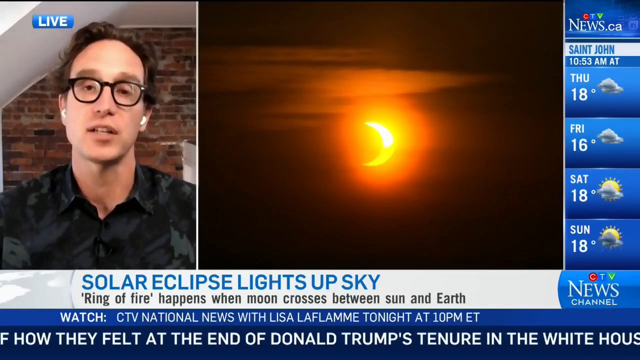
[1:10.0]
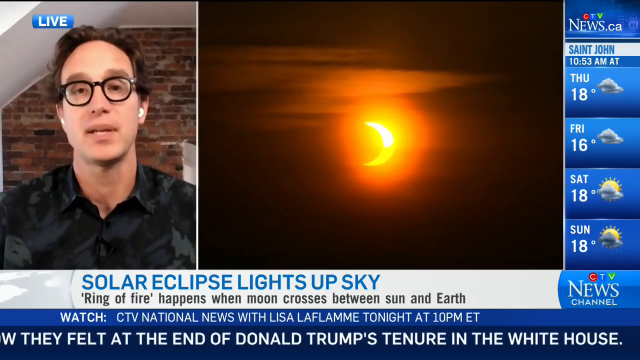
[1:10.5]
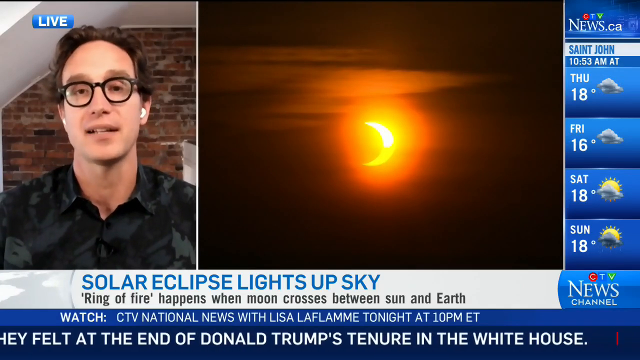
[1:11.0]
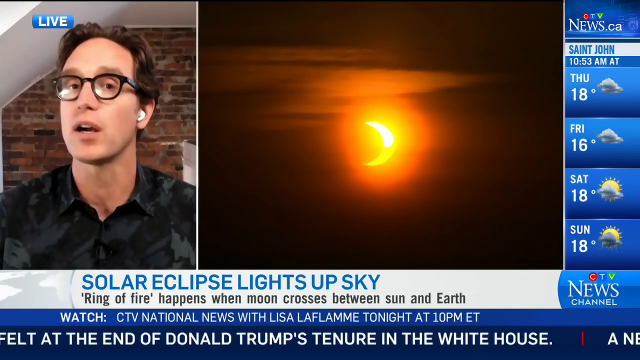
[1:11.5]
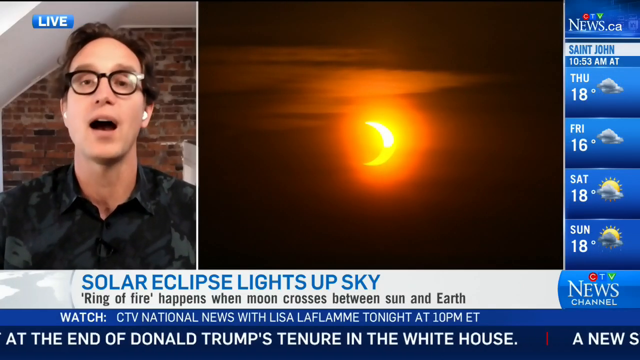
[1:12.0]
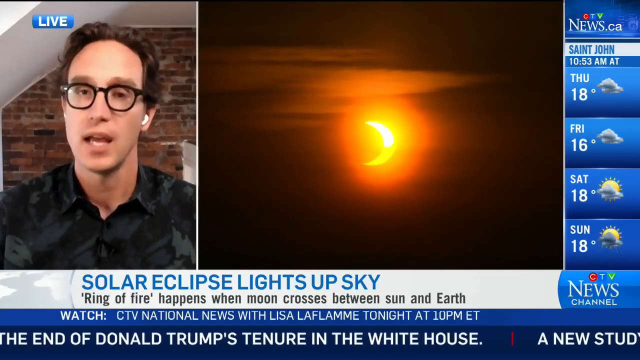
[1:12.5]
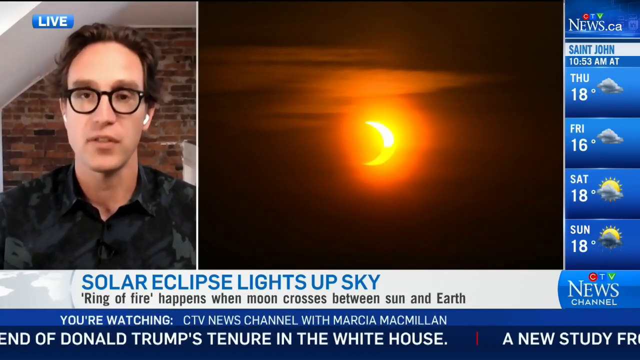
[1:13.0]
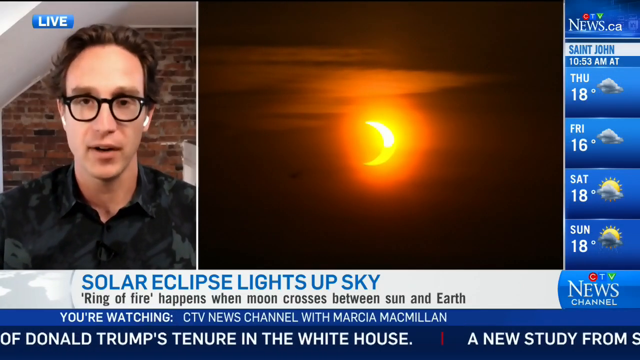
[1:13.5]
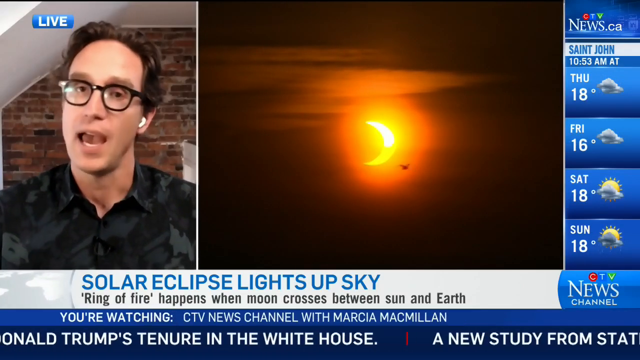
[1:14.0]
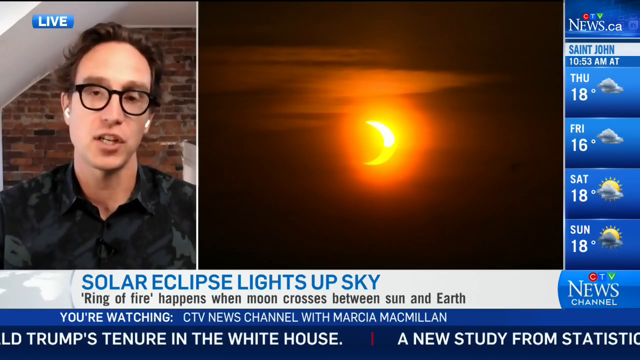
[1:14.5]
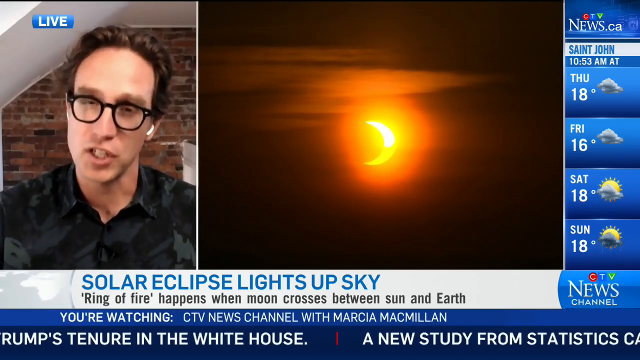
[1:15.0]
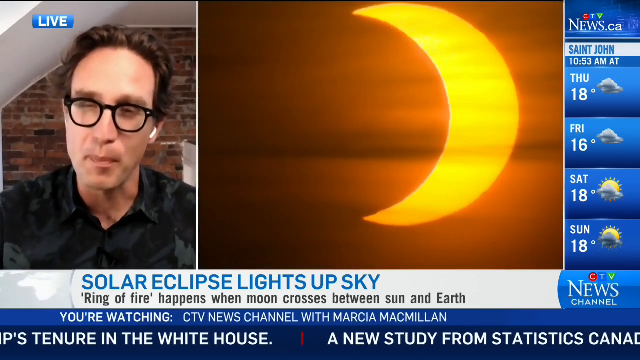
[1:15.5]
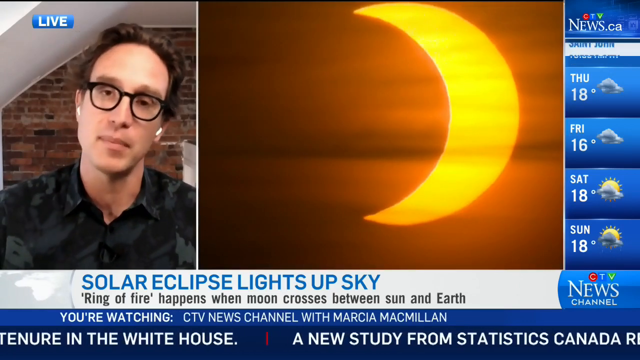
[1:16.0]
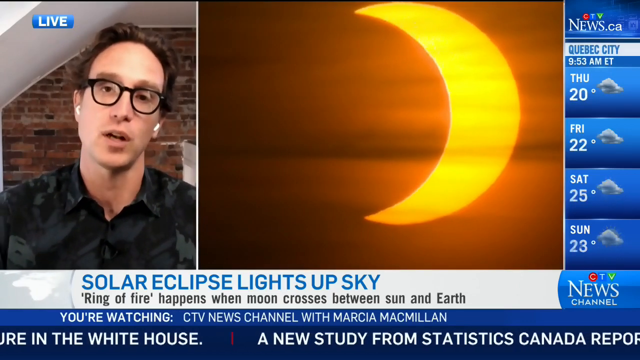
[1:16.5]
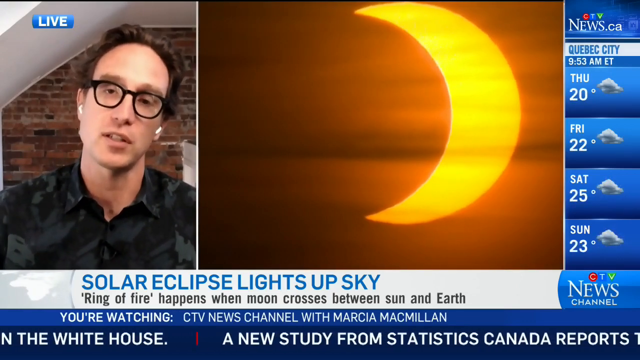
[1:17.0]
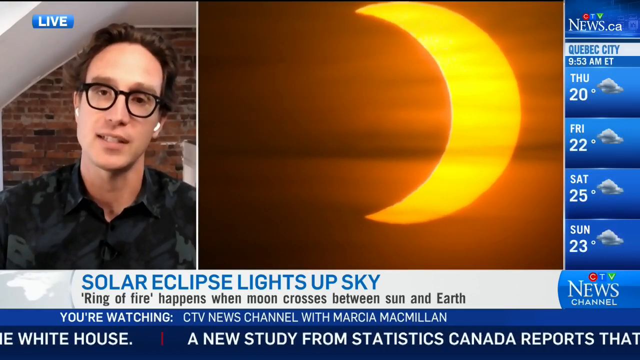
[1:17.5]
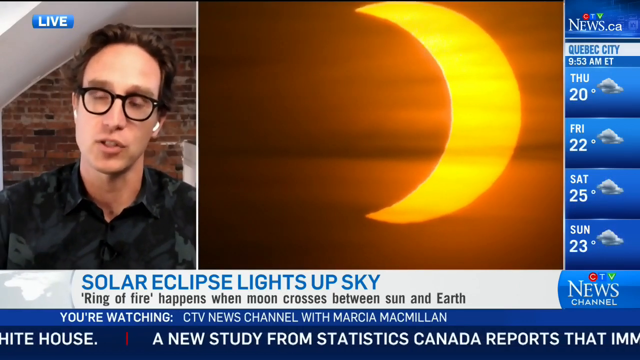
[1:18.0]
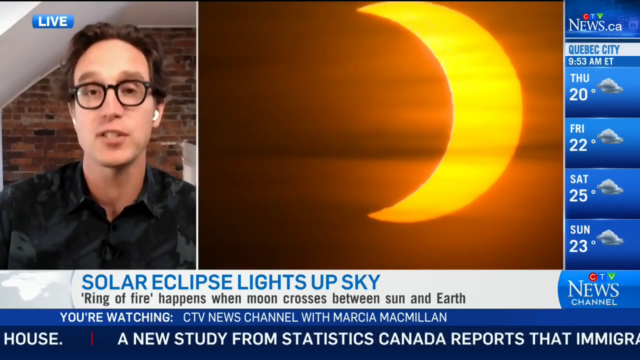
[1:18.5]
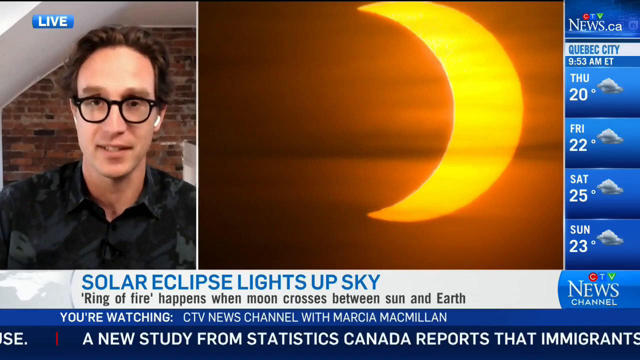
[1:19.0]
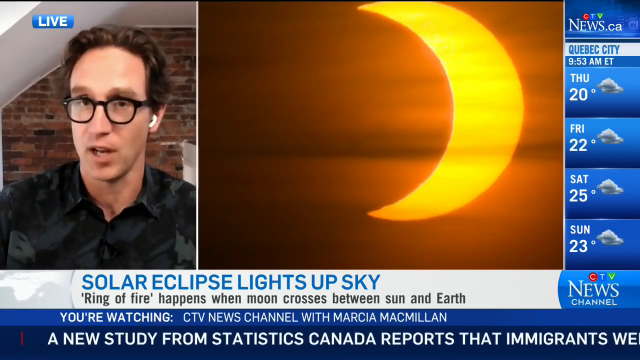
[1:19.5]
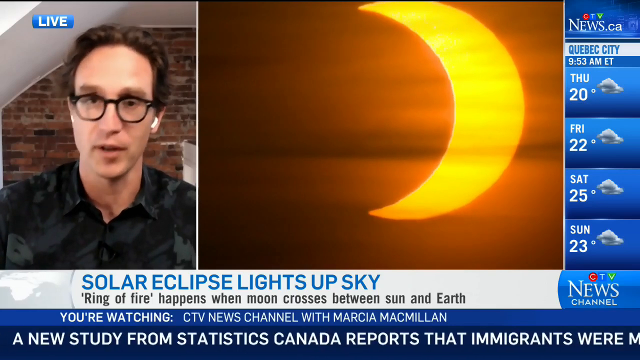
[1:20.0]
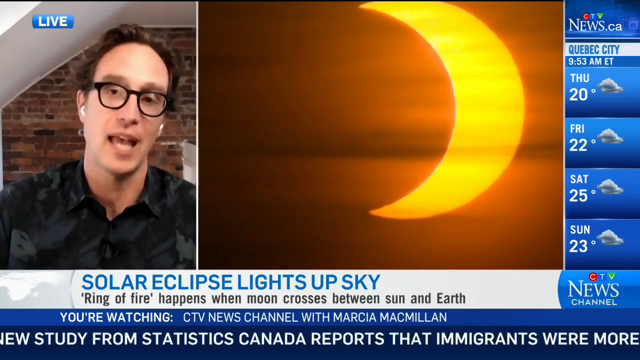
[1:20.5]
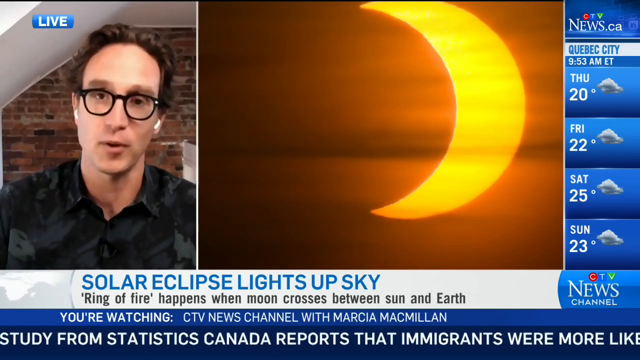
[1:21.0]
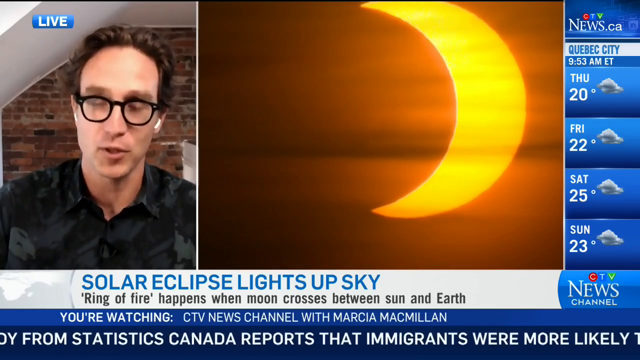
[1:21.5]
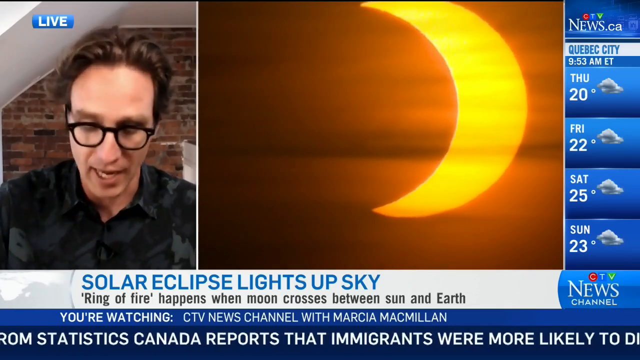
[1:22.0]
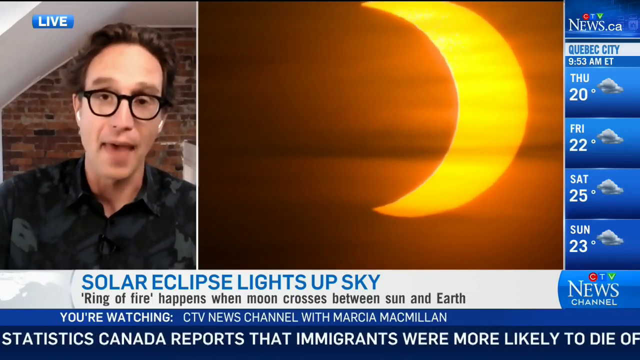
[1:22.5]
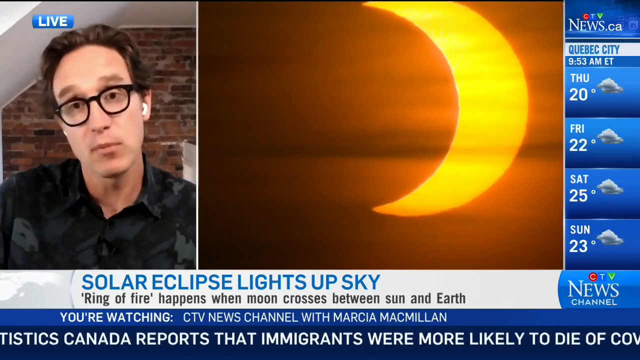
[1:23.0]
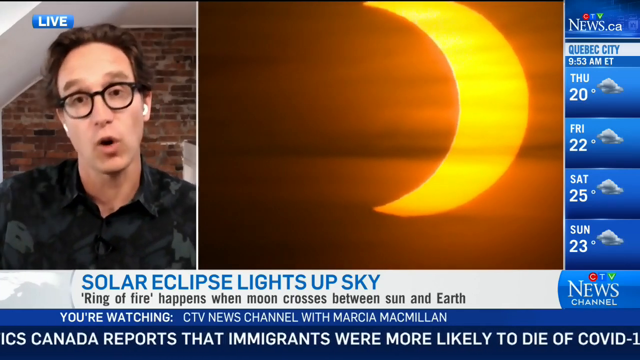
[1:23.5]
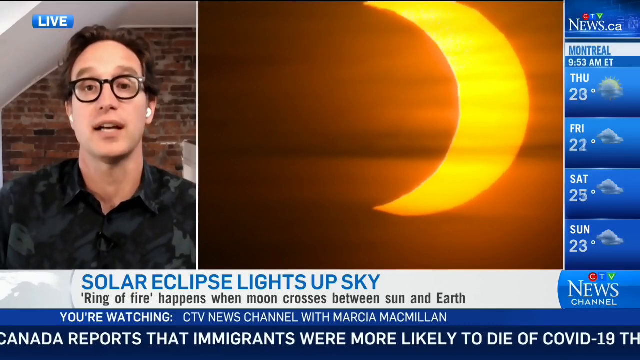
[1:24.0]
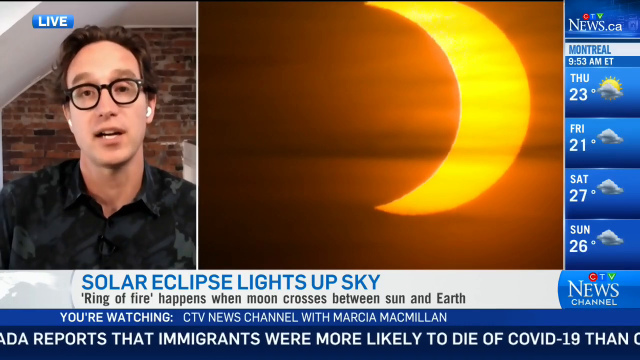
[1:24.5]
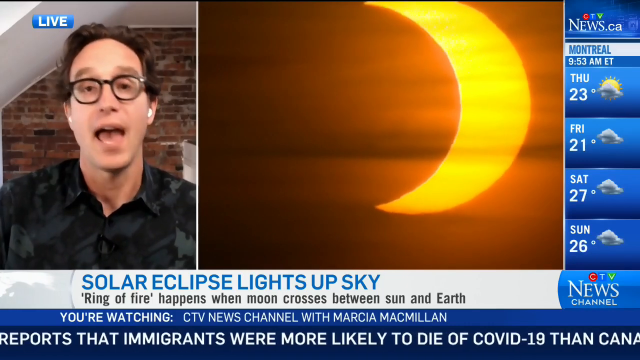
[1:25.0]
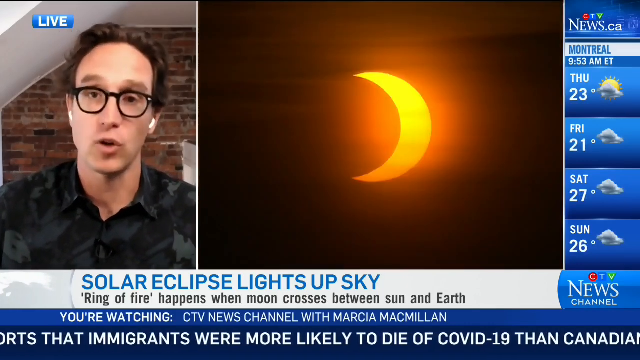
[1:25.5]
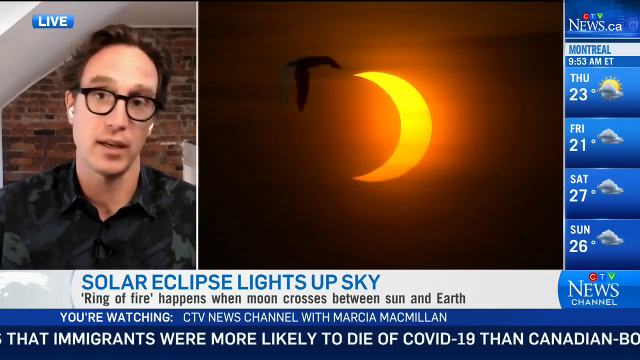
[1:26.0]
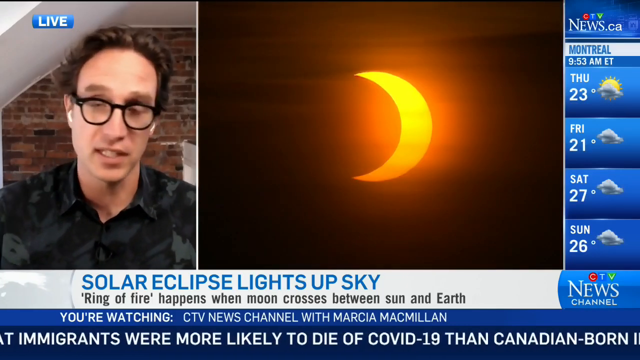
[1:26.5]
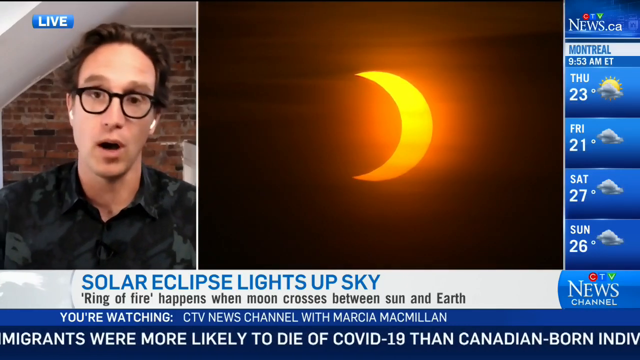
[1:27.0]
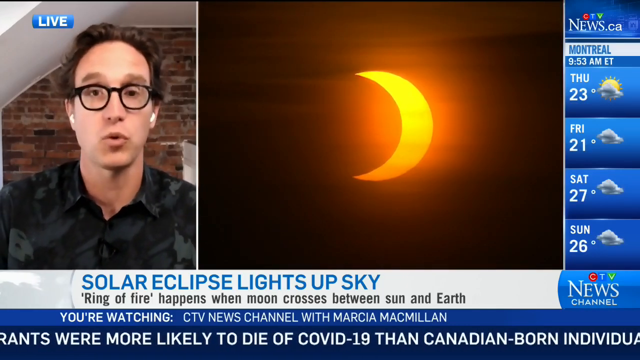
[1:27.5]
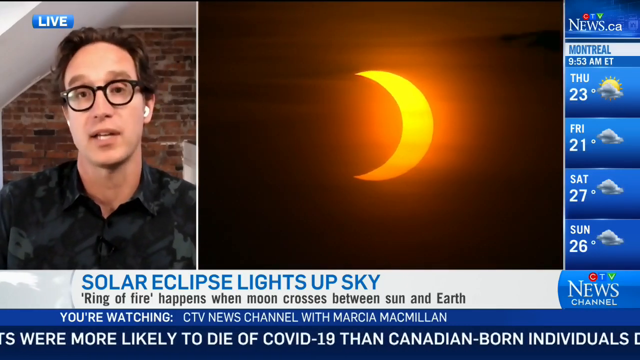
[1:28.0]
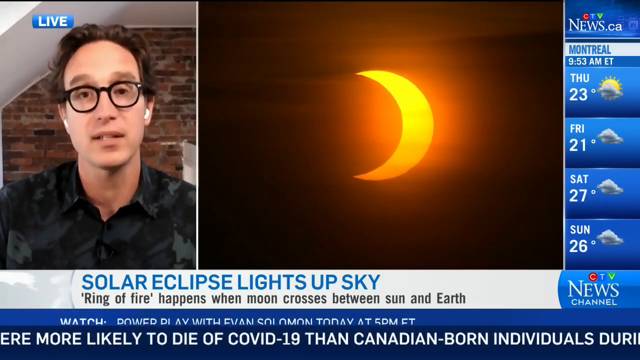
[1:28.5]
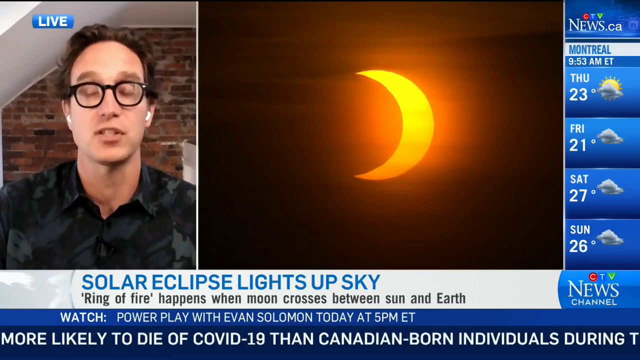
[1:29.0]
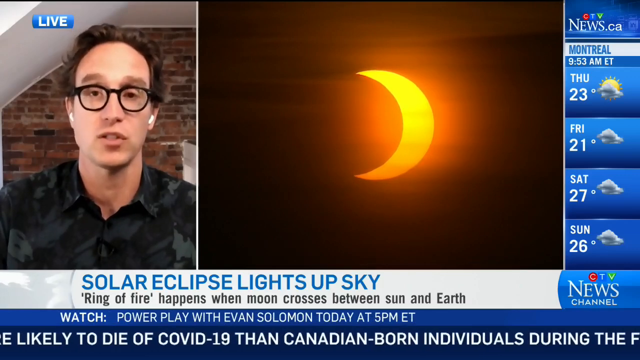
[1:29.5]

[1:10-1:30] While the man presents the news, birds pass through the footage of the solar eclipse up in the sky. The ctvnews.ca weather listing for Quebec City at 9:53 am shows Tuesday 20 degrees with clouds, Friday 22 degrees with clouds, Saturday 25 degrees with clouds and Sunday 23 degrees with clouds. Another location at 9:53 am shows Thursday 23 degrees with sun, Friday 21 degrees with clouds, Saturday 27 degrees with clouds and Sunday 26 degrees with clouds and sun.